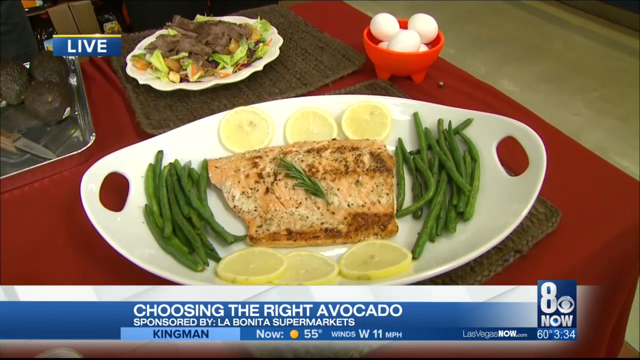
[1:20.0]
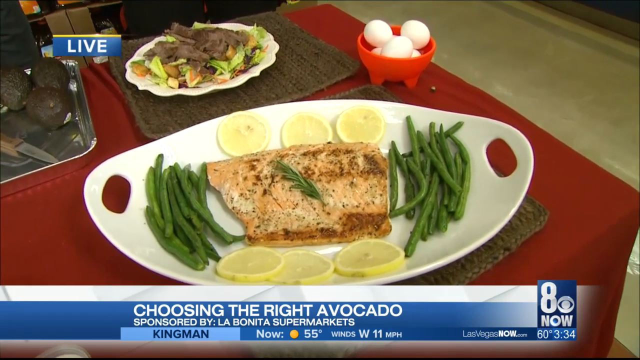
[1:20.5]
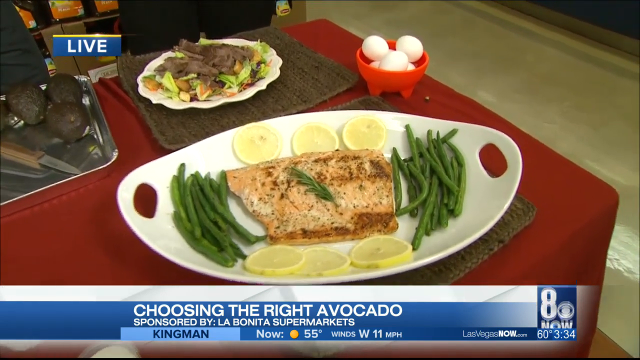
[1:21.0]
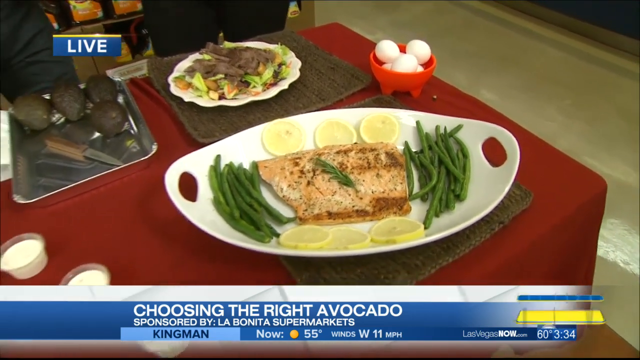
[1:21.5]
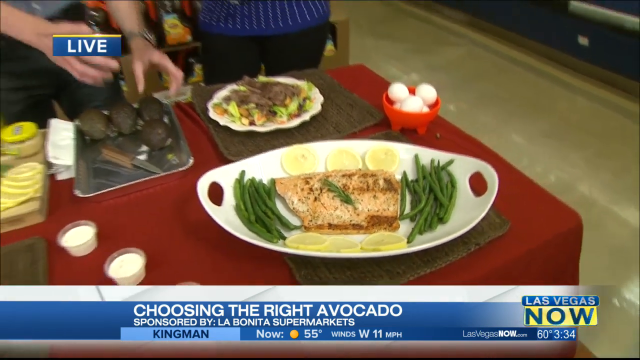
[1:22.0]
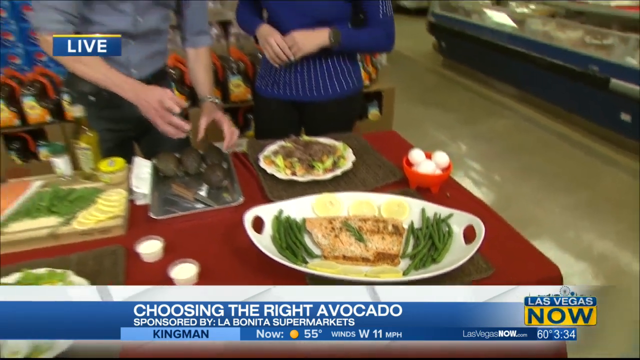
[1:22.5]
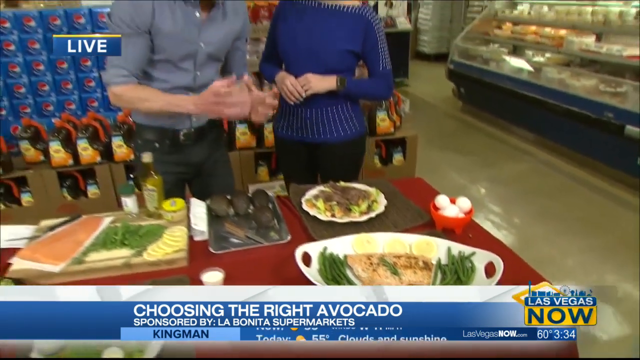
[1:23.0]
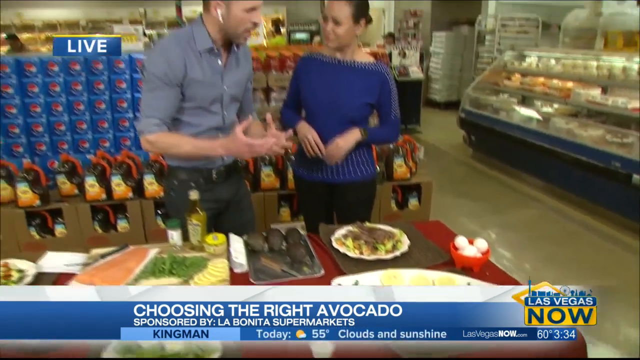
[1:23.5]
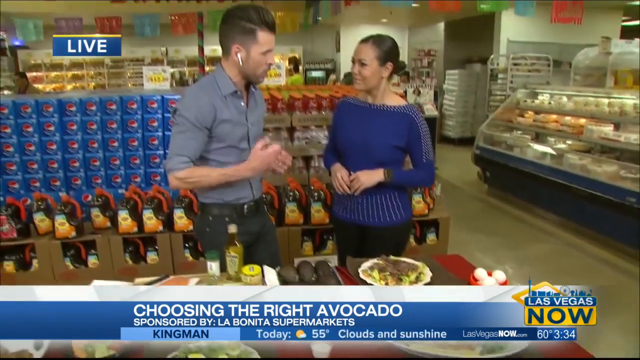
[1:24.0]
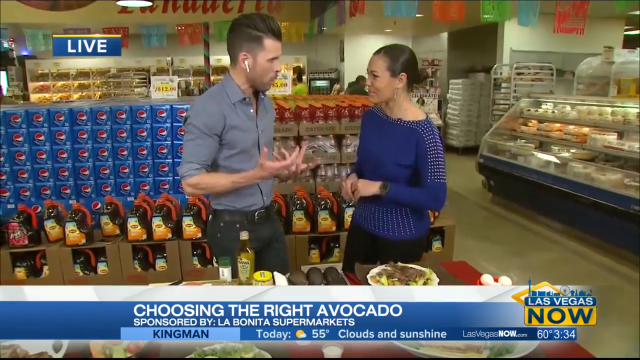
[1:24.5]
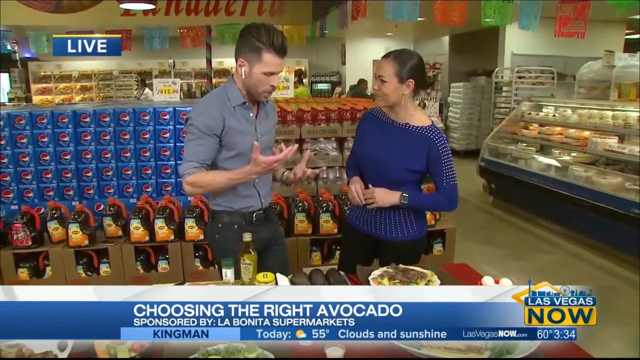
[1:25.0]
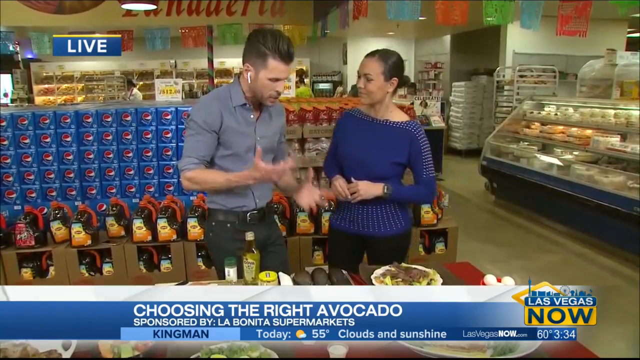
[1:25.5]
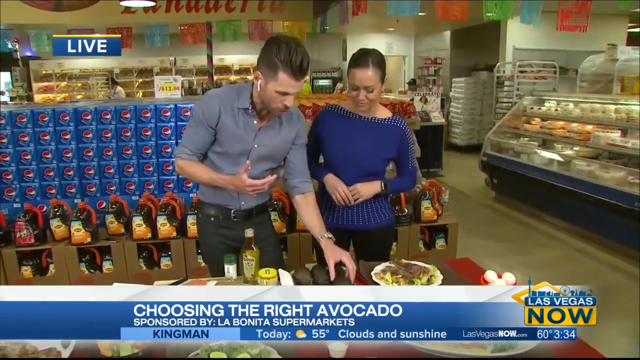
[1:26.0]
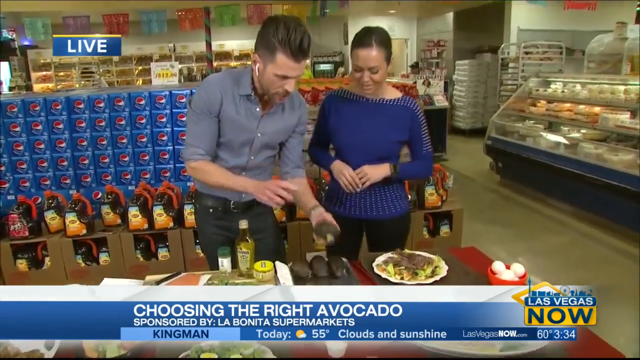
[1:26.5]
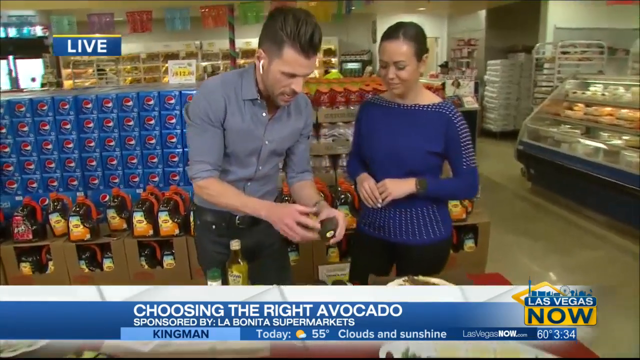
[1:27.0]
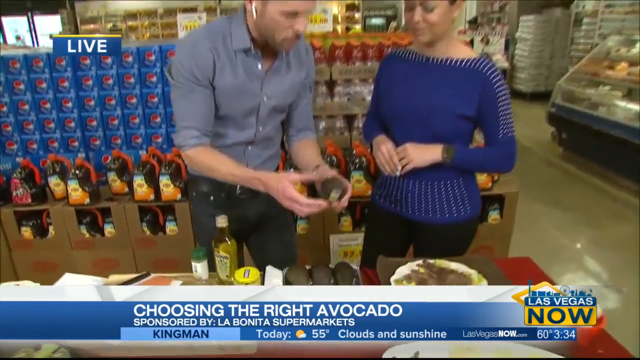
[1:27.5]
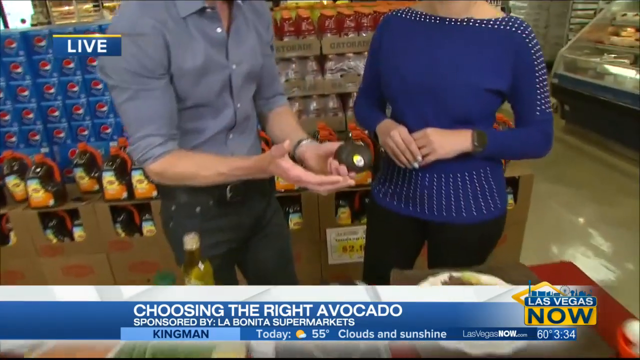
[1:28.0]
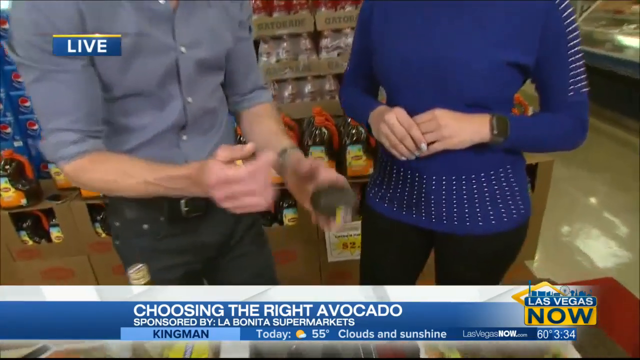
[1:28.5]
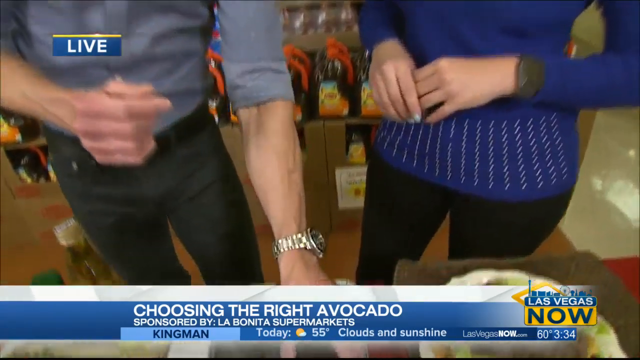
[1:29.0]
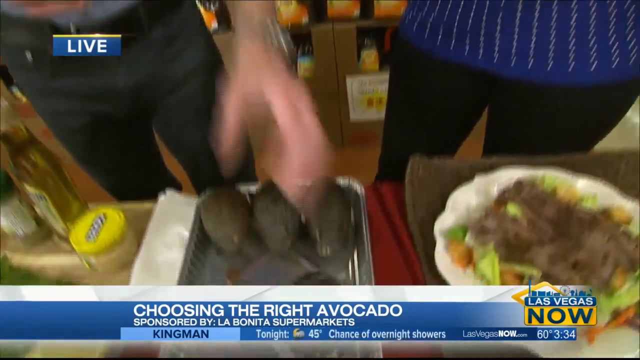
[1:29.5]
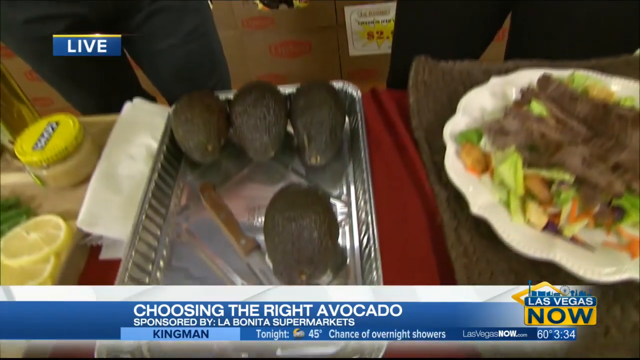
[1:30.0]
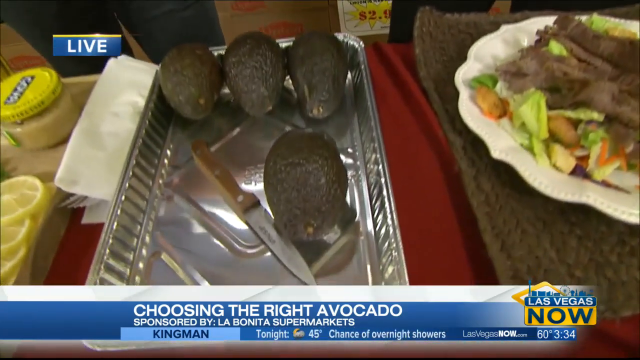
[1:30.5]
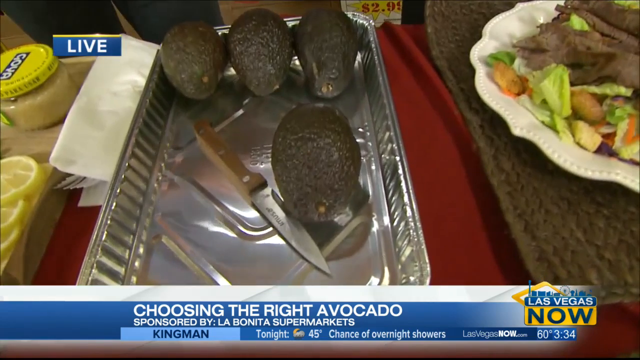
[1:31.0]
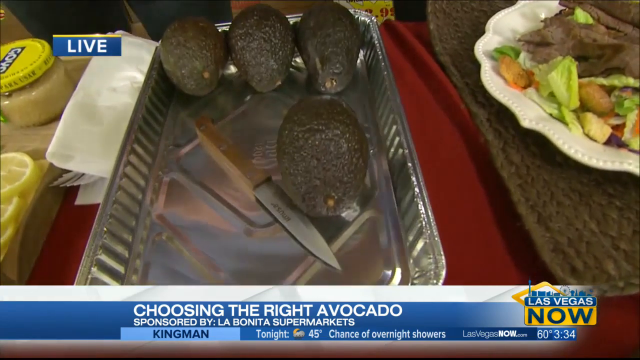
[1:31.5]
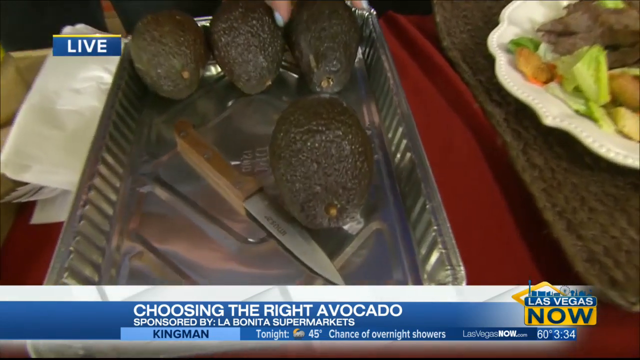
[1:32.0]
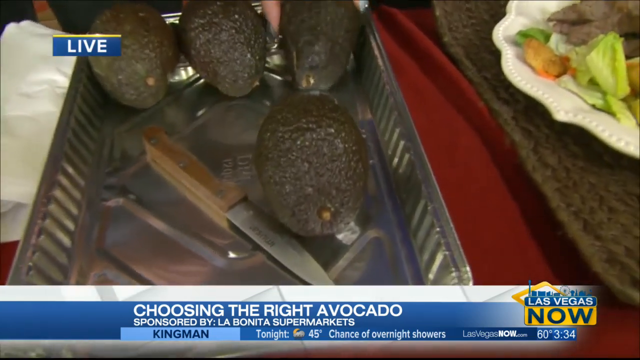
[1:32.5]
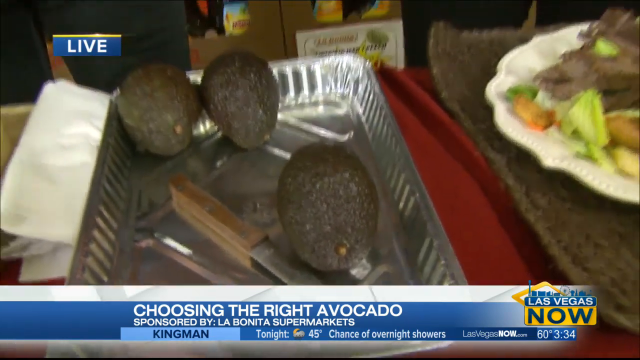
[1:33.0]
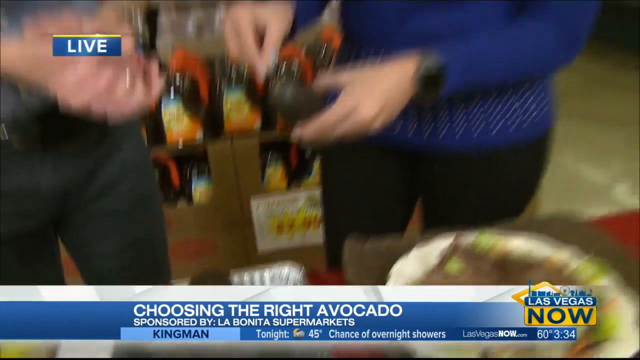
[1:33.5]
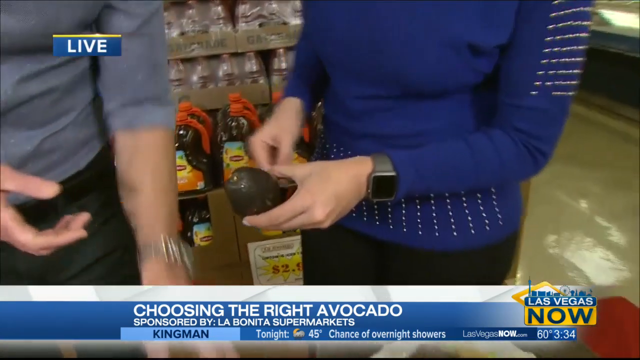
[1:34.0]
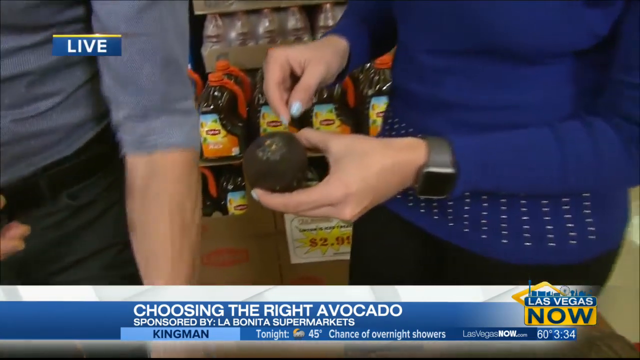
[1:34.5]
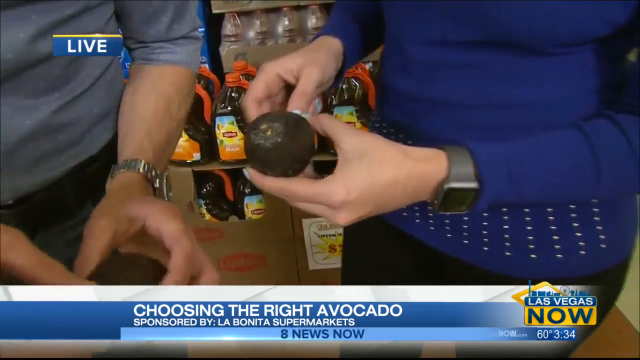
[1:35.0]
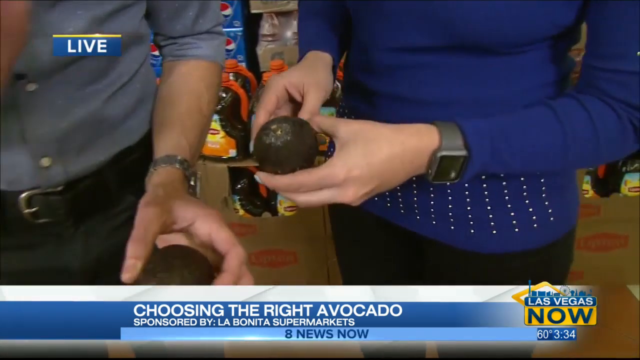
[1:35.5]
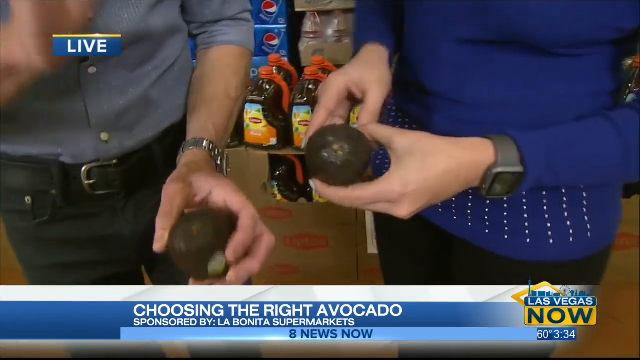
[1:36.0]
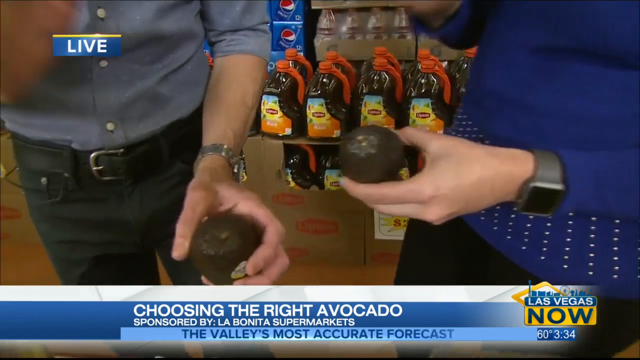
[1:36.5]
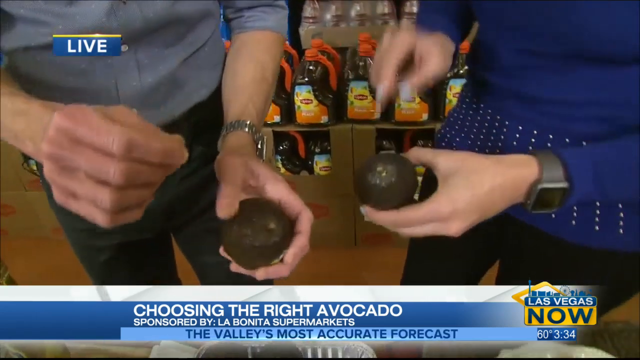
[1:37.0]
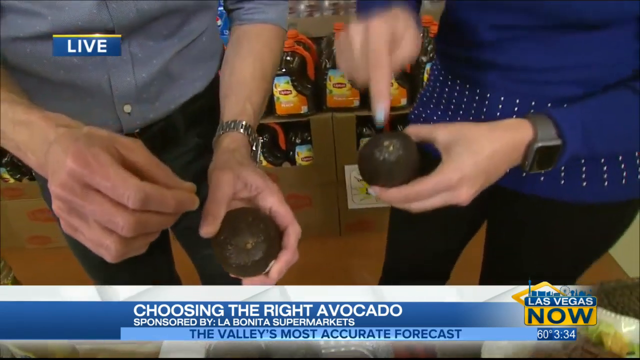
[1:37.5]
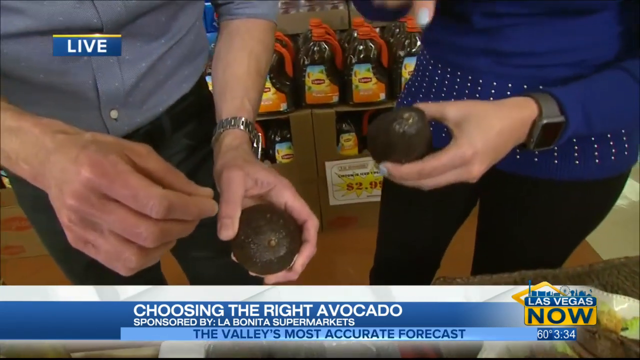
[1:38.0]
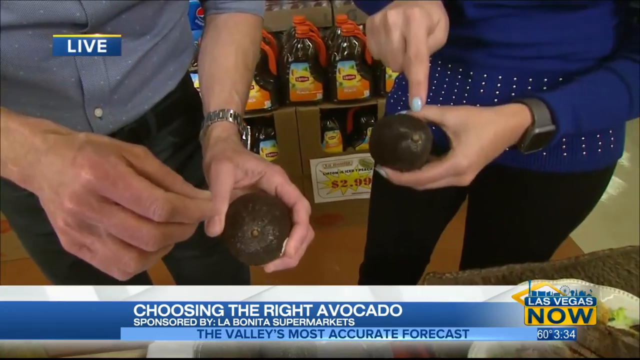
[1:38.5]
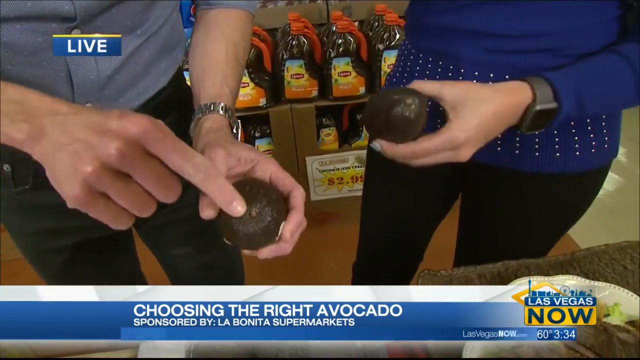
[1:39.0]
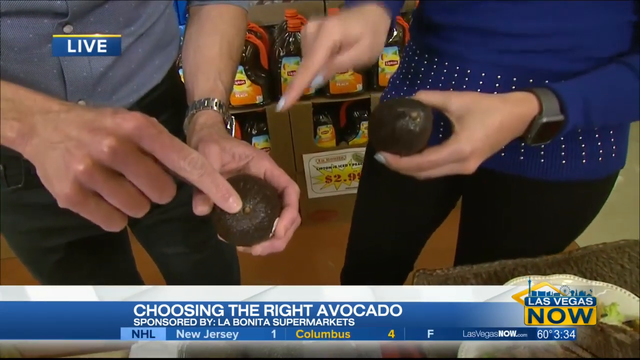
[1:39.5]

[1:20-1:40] The screen says "live" and "choosing the right avocado," sponsored by LA Bonita Supermarkets. There is a little thing of eggs and a big slab of salmon next to asparagus and lemon slices, followed by avocados and a plate with something unidentified on it. The camera zooms out to show two people talking: a man with ear pods in, who looks like he works for the news, and a lady who is maybe the owner of the grocery store. Behind them are Pepsis, Gatorade bottles and tea bottles, and there is a bakery section. The man picks up an avocado, talks about it and puts it back down. Then they both pick one up and she points at it.